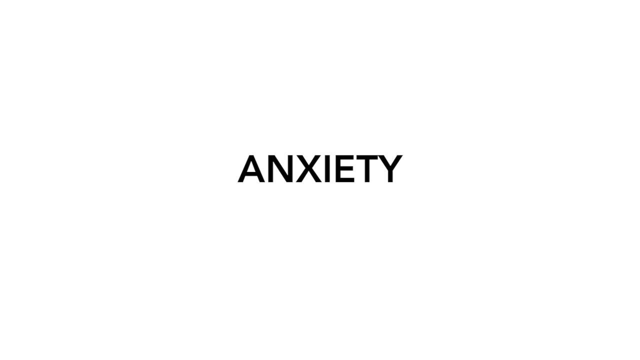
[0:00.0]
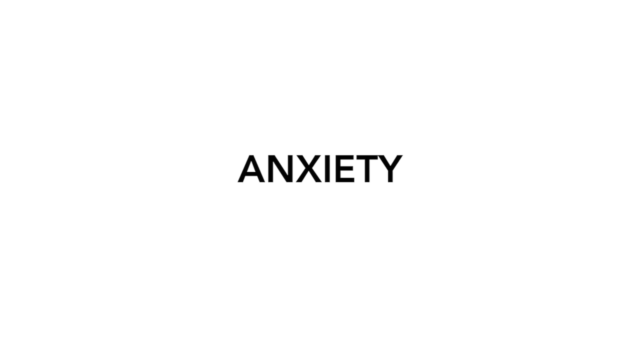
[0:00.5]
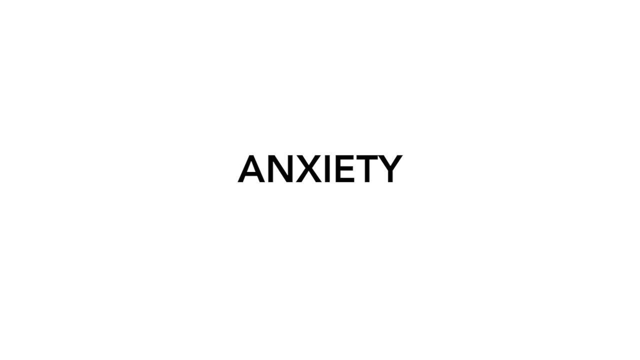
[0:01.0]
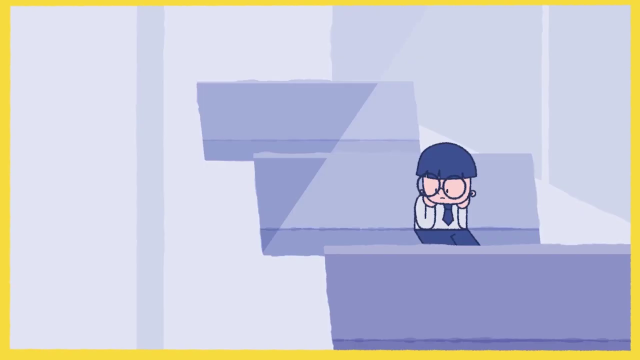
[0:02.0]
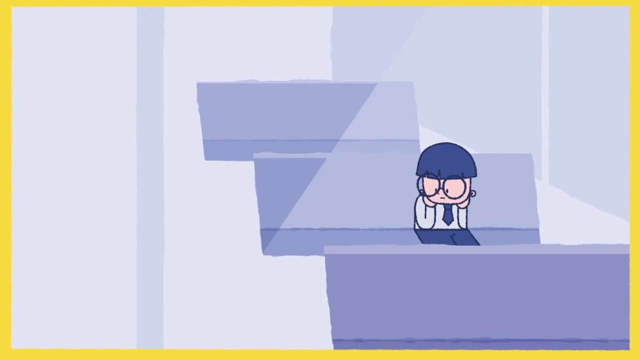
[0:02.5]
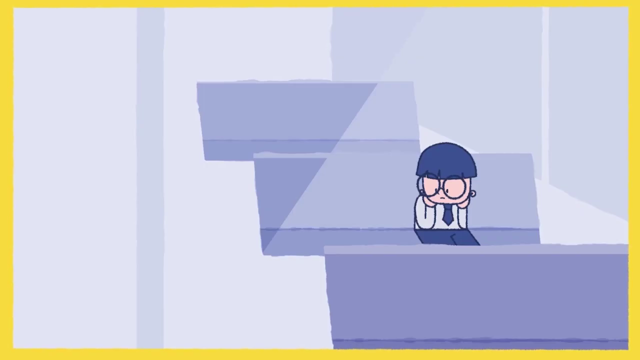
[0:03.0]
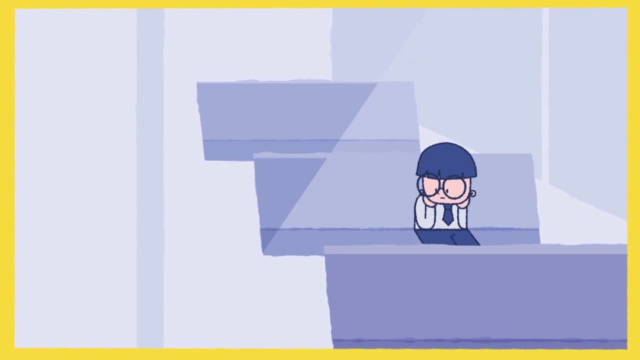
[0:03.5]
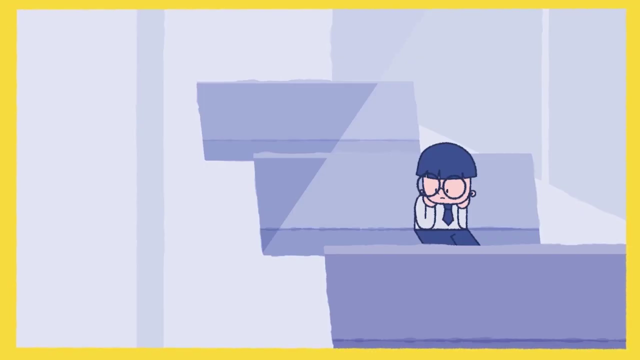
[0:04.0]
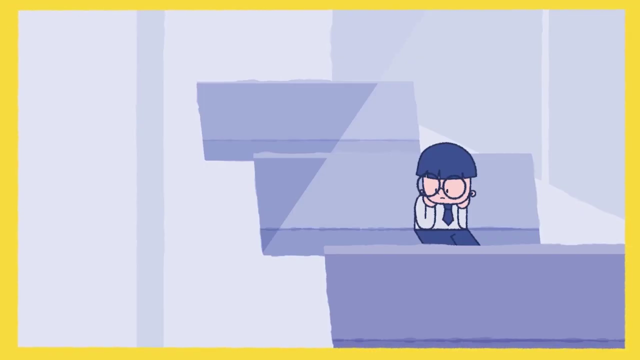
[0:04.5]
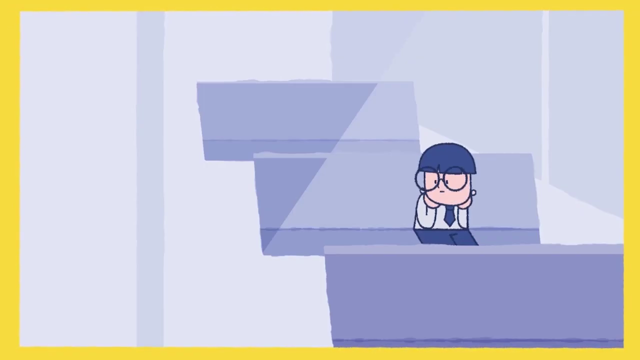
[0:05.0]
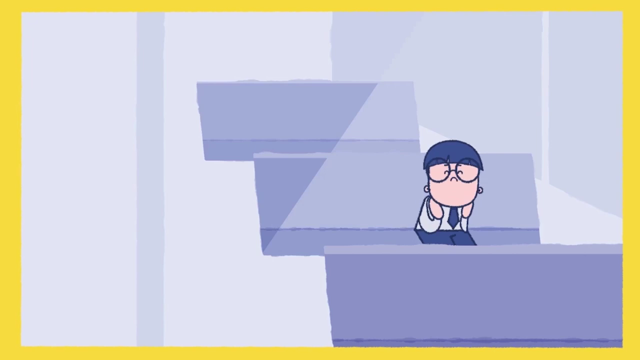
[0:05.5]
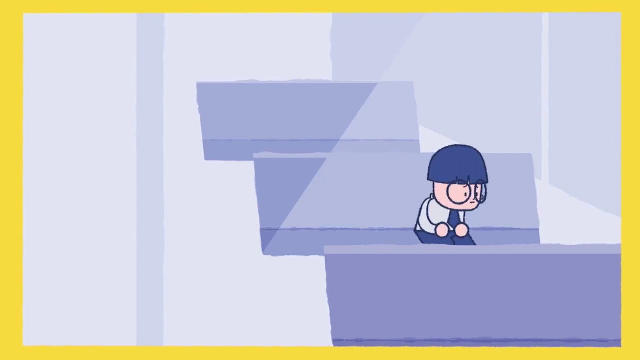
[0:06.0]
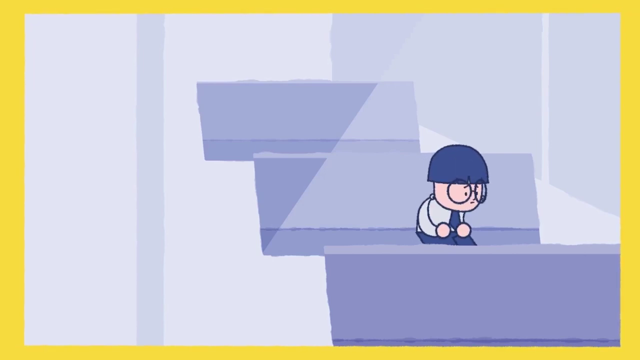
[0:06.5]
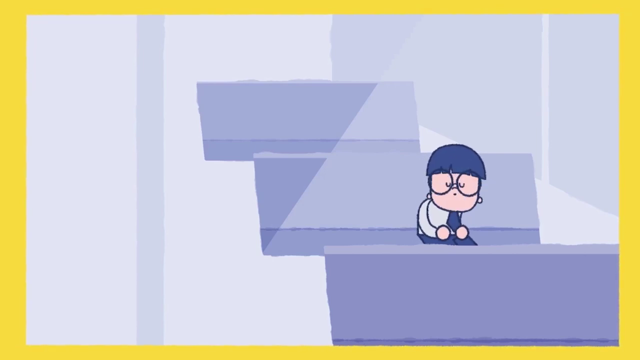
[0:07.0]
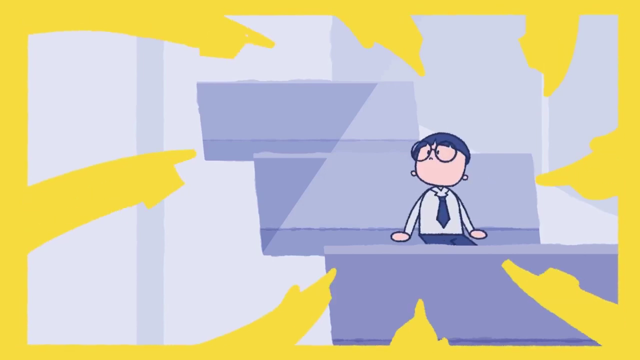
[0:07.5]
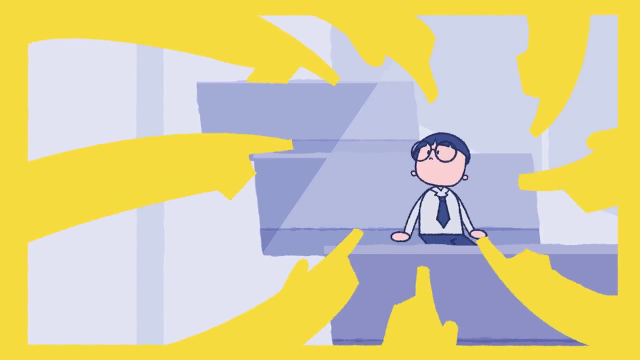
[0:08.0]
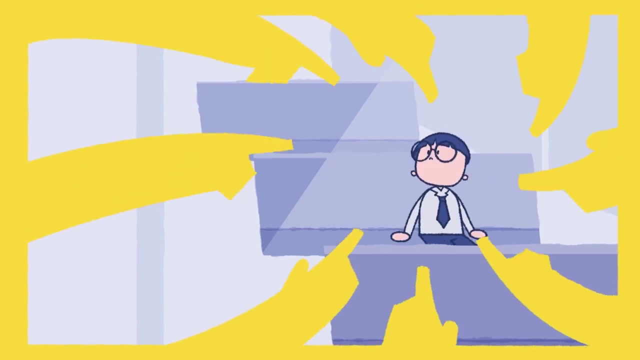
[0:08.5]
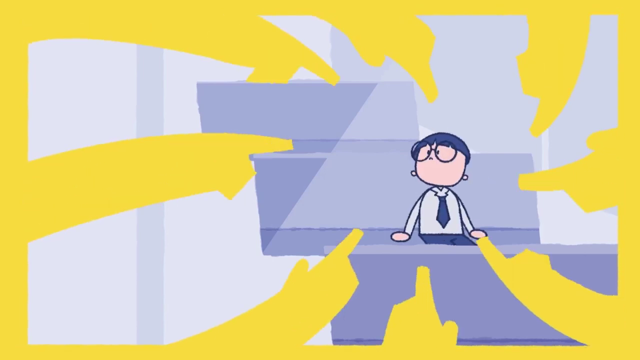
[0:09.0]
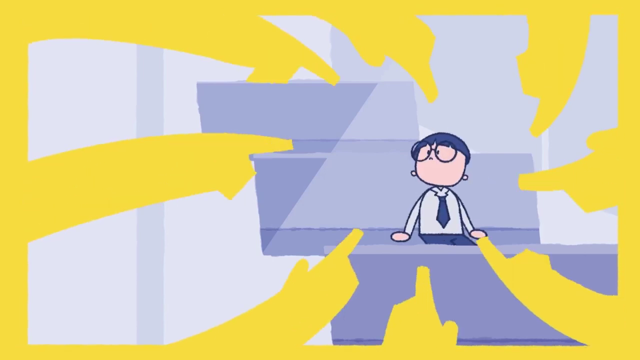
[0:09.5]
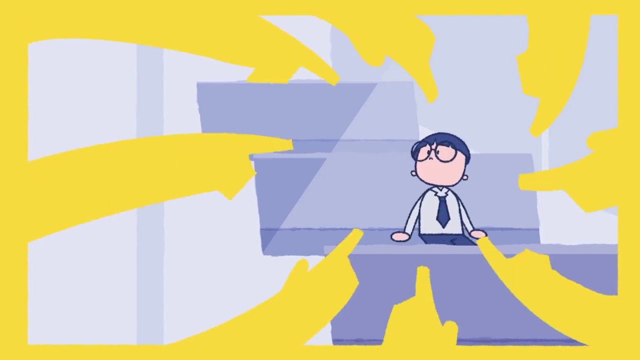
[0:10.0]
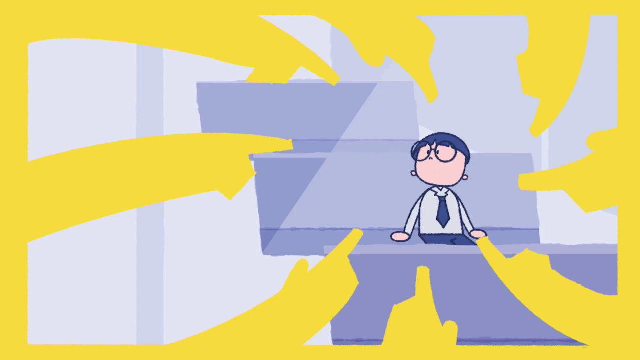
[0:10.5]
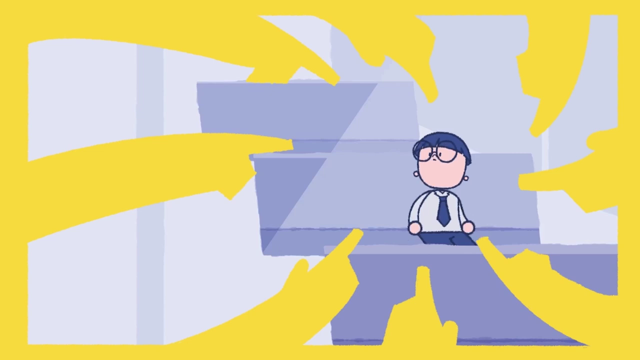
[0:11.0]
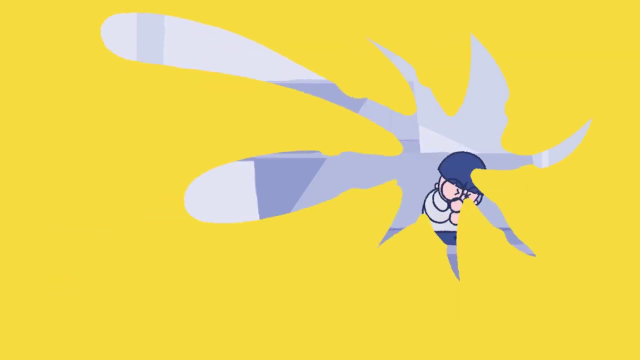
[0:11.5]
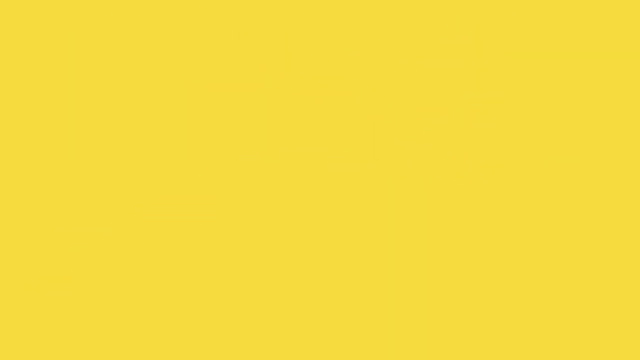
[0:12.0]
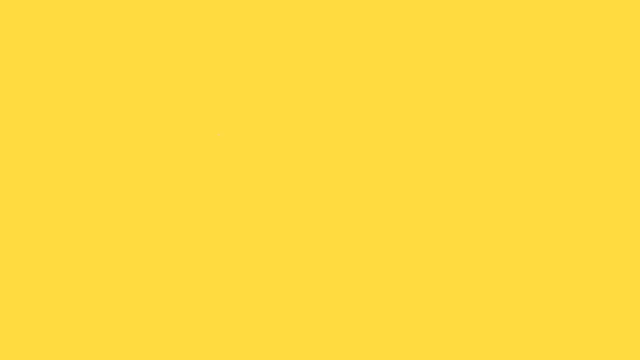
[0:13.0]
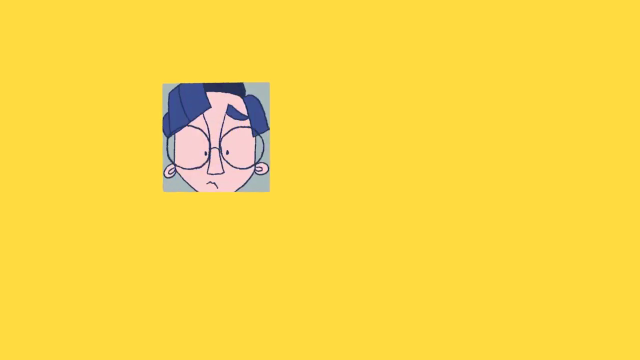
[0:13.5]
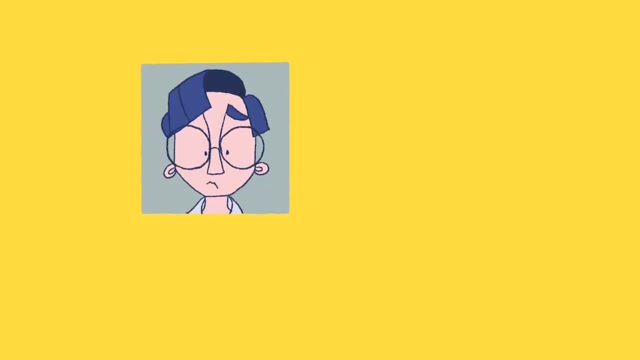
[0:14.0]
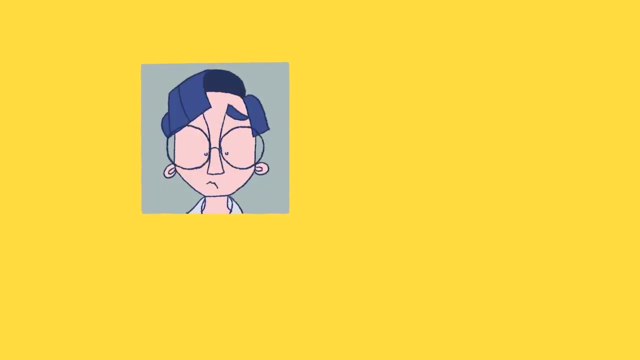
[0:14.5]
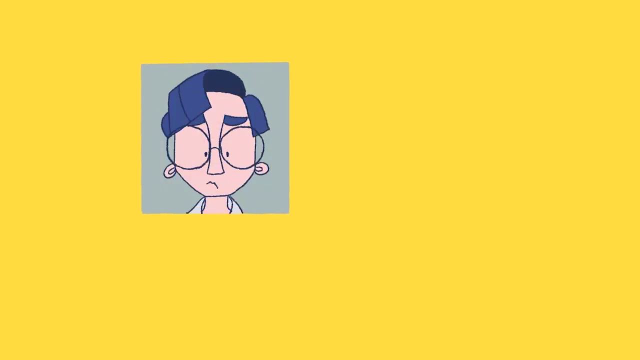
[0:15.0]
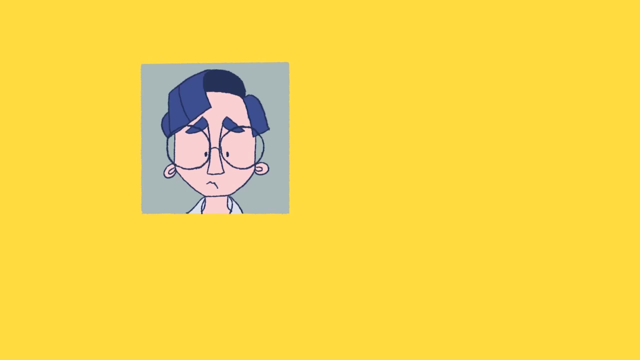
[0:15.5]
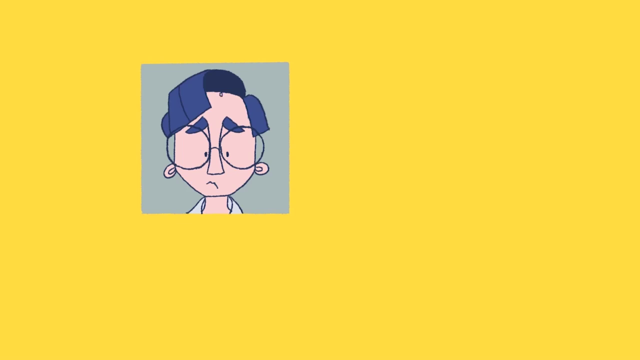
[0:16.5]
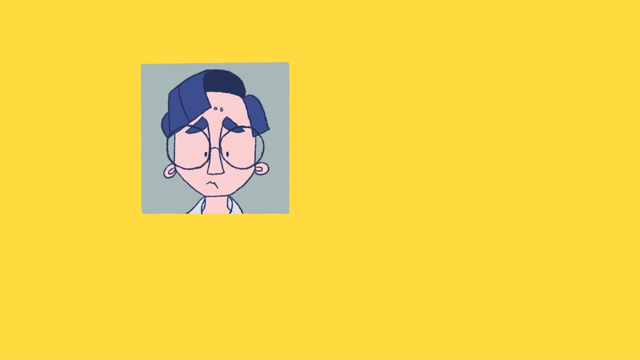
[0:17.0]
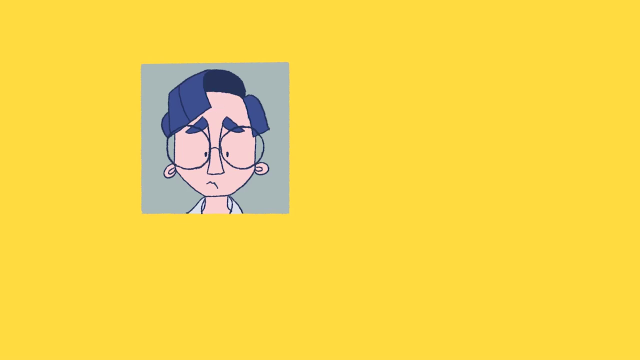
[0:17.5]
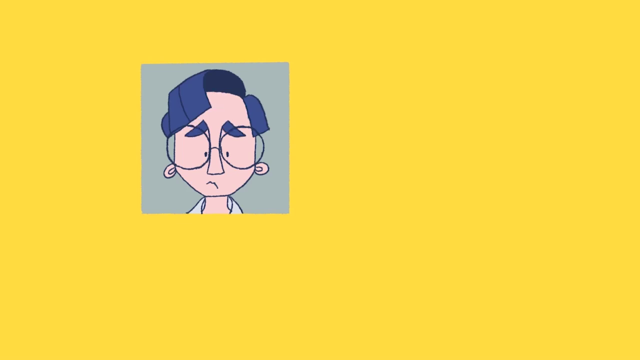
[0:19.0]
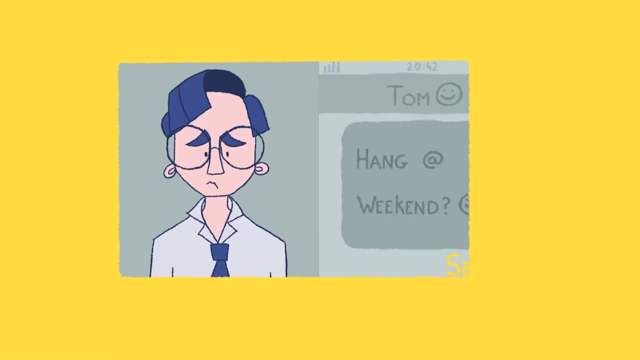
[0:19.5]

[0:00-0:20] This appears to be an instructional video about the effects or causes of anxiety. A cartoon character sits alone on a staircase in a blue colour tone. The area around them then closes in with yellow fingers pointing at the character, as if everybody is looking at and pointing out this single, lone figure, a visual representation of how anxiety feels. The yellow hands close in on the character until the screen is fully yellow. Next comes a close-up of the cartoon character's face with beads of sweat coming down the forehead, and a screenshot of a text message appears next to the person, something they need to look at but are anxious about.